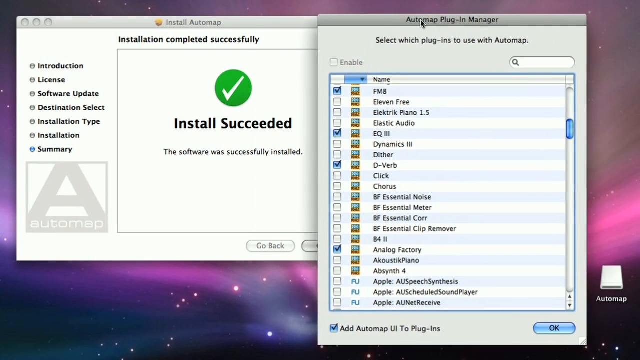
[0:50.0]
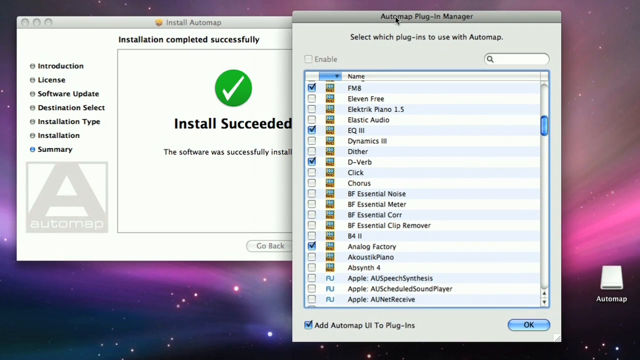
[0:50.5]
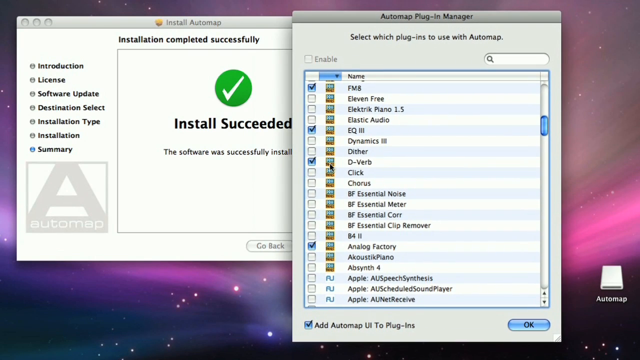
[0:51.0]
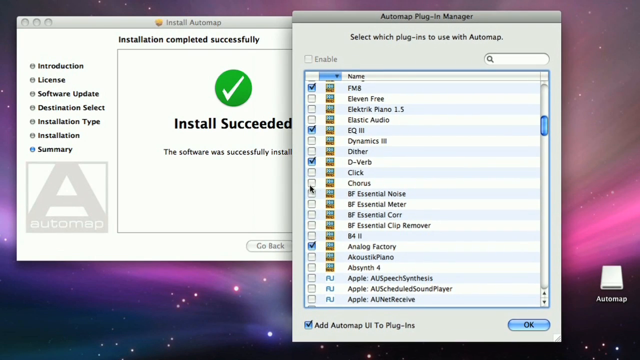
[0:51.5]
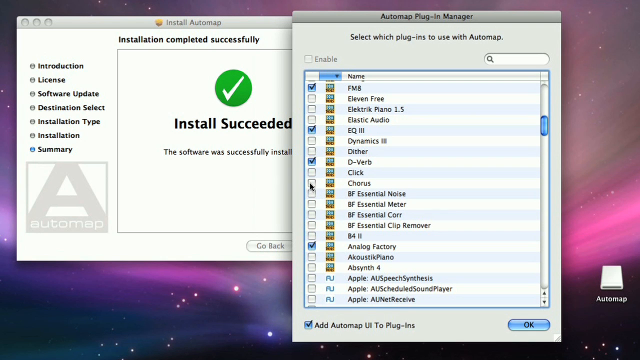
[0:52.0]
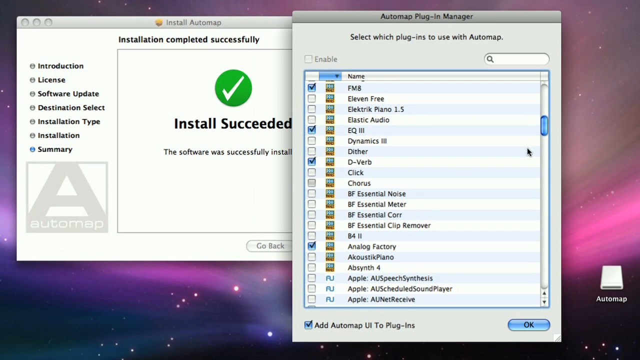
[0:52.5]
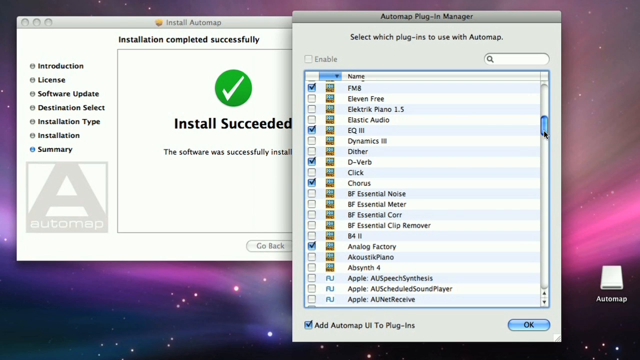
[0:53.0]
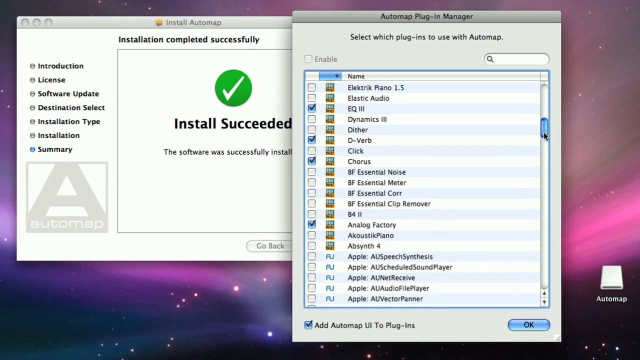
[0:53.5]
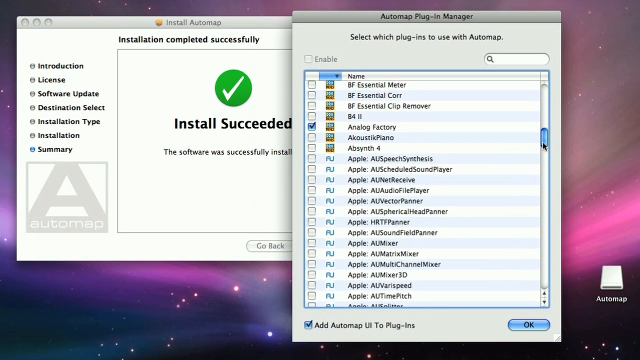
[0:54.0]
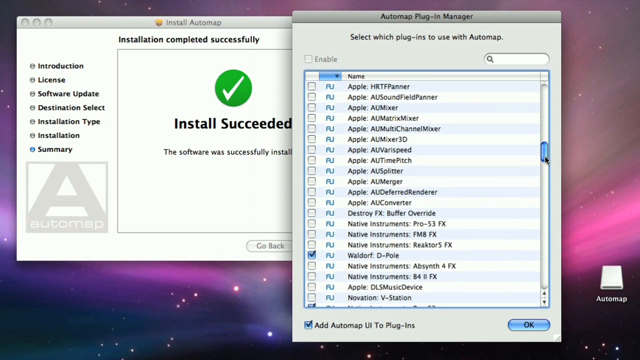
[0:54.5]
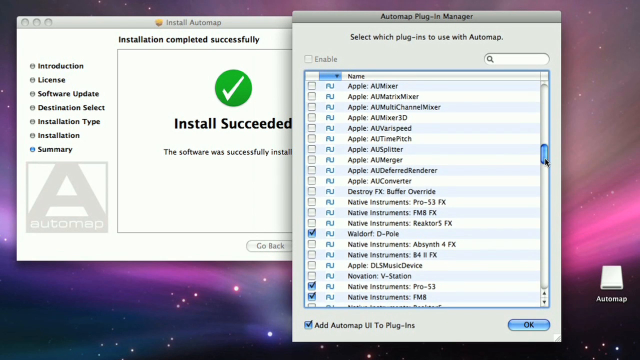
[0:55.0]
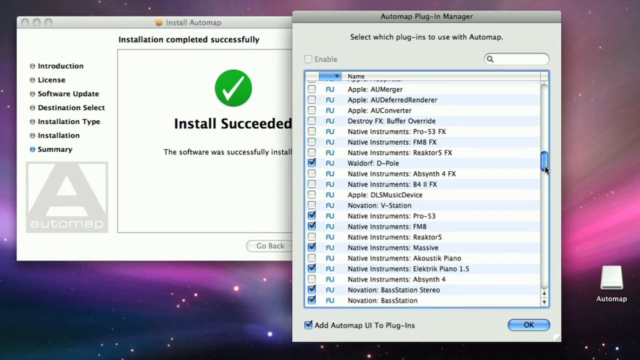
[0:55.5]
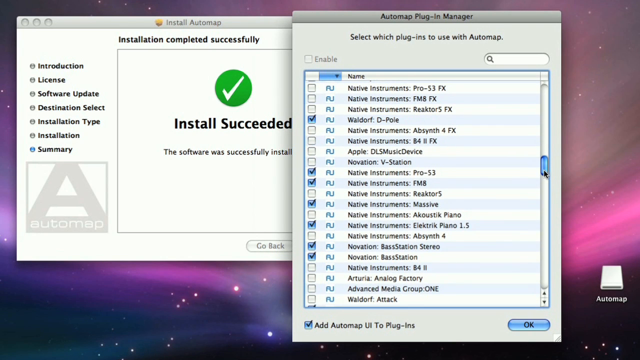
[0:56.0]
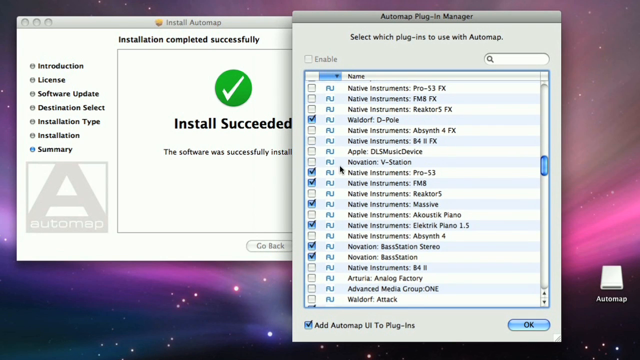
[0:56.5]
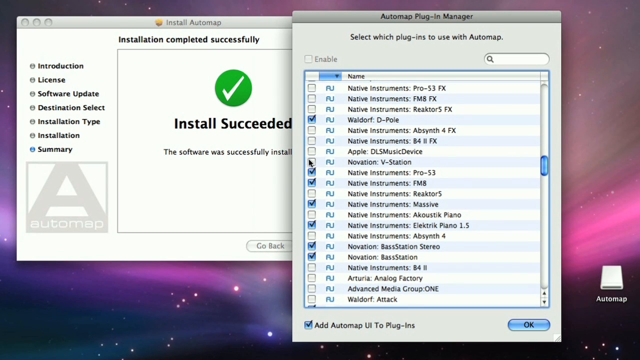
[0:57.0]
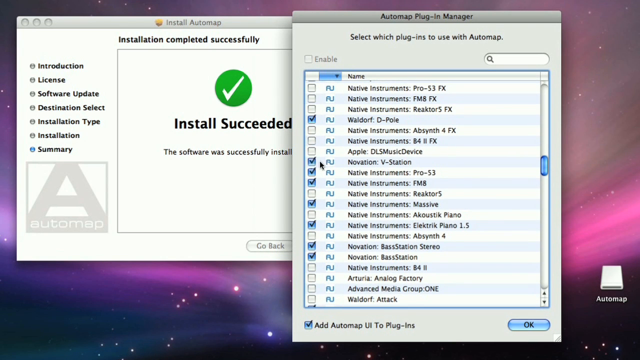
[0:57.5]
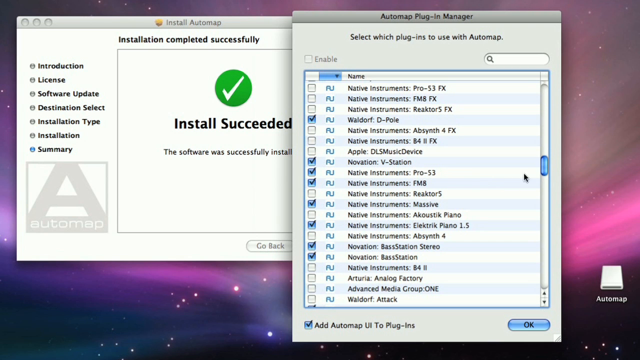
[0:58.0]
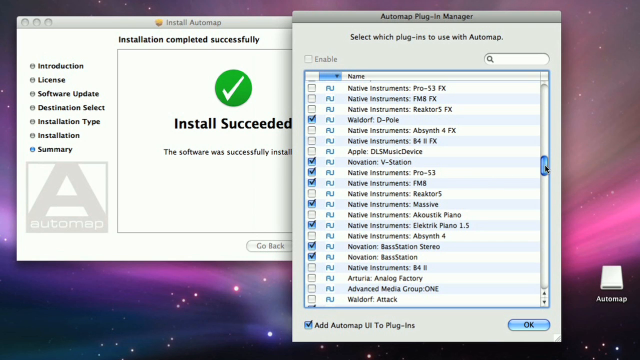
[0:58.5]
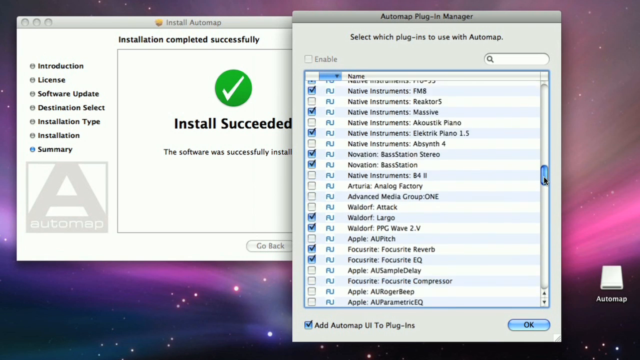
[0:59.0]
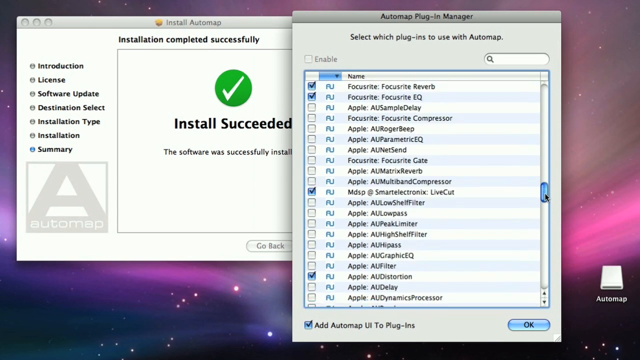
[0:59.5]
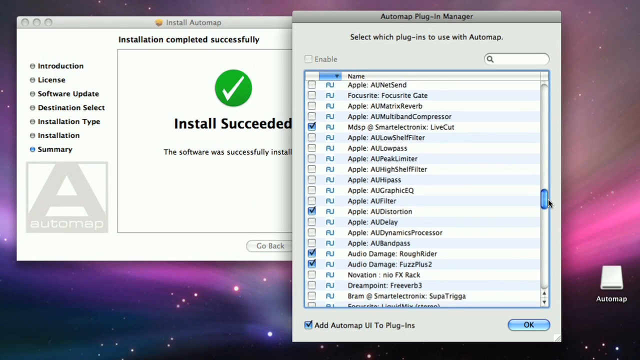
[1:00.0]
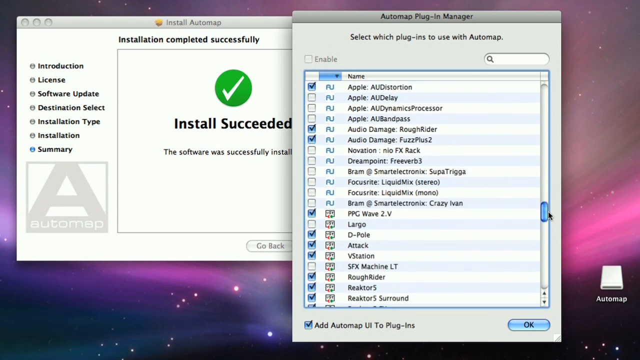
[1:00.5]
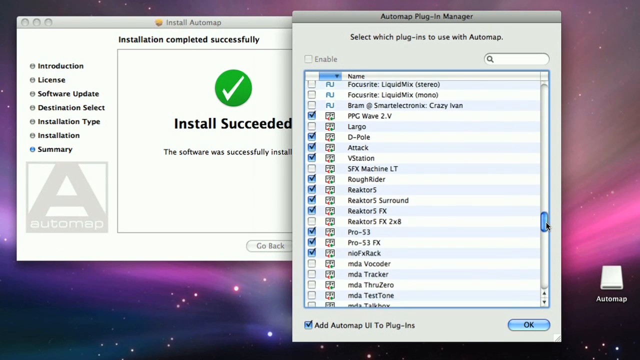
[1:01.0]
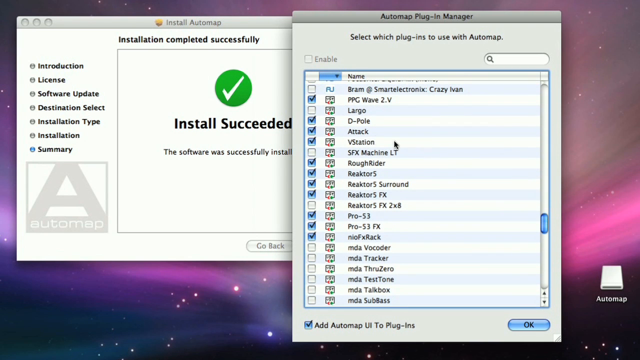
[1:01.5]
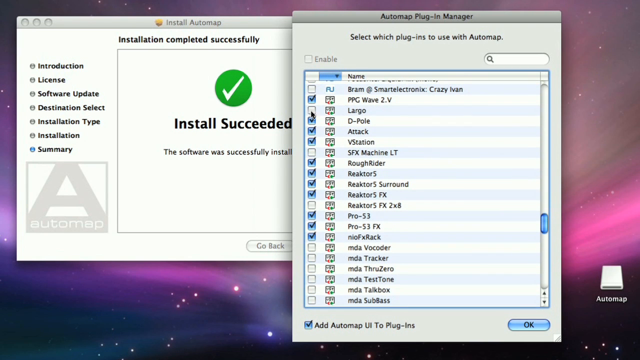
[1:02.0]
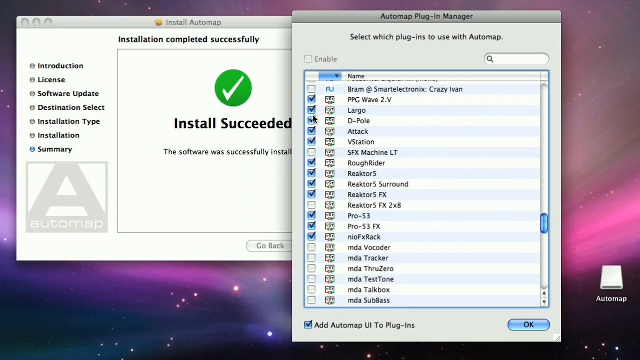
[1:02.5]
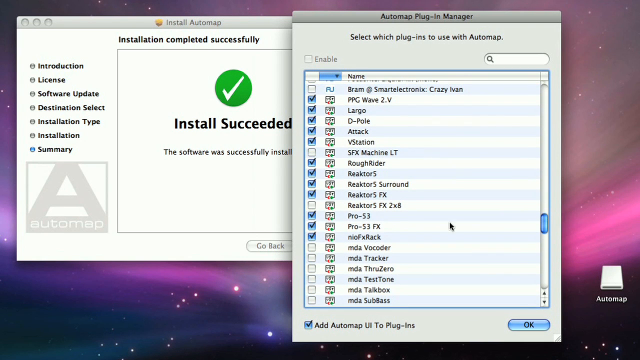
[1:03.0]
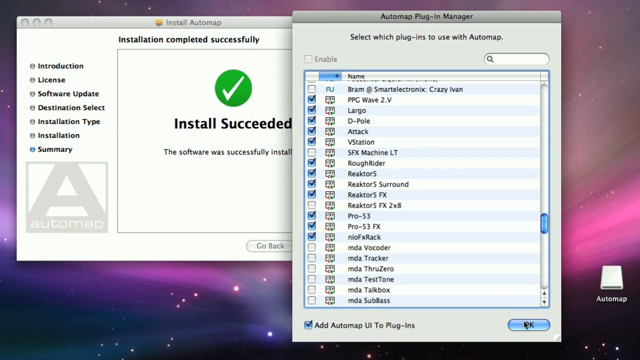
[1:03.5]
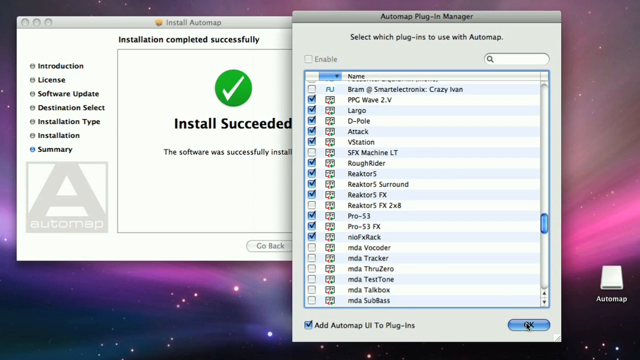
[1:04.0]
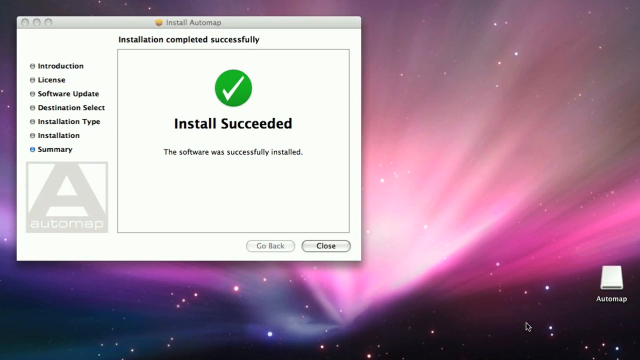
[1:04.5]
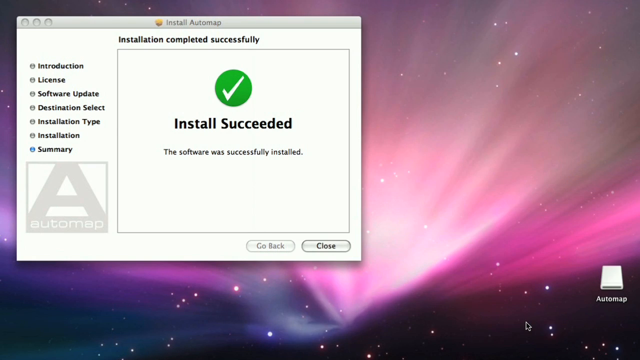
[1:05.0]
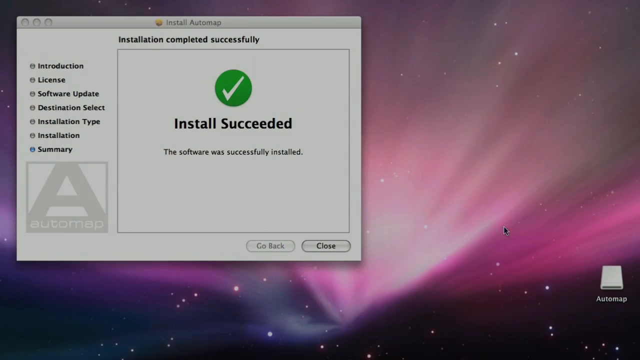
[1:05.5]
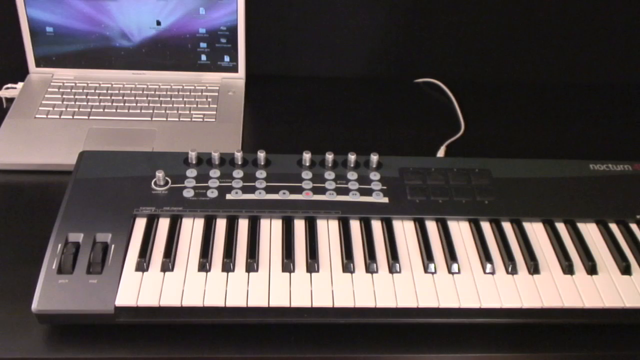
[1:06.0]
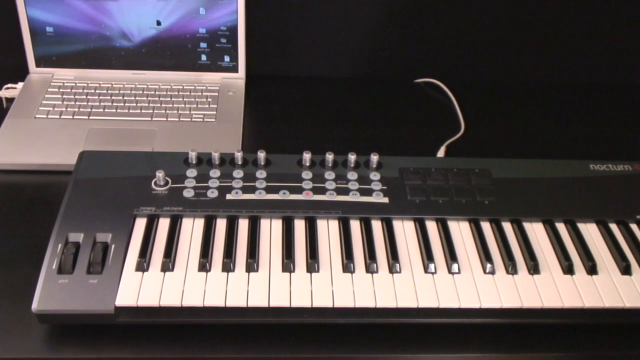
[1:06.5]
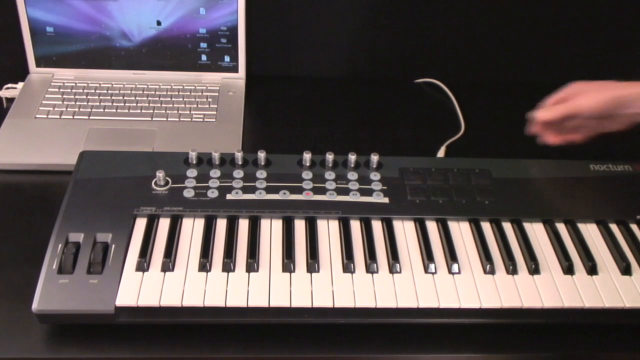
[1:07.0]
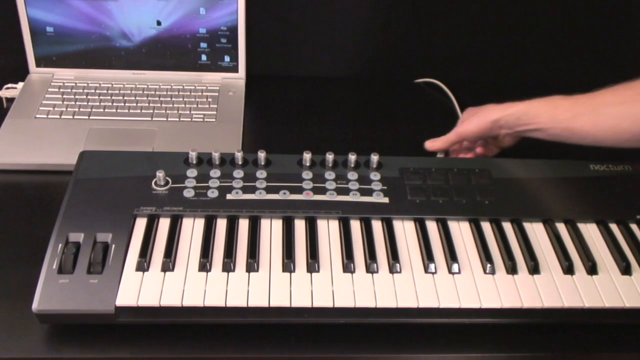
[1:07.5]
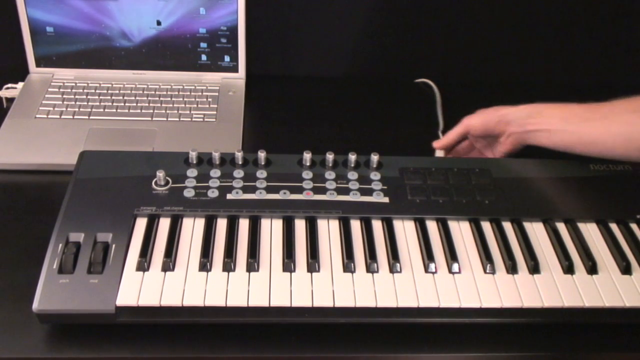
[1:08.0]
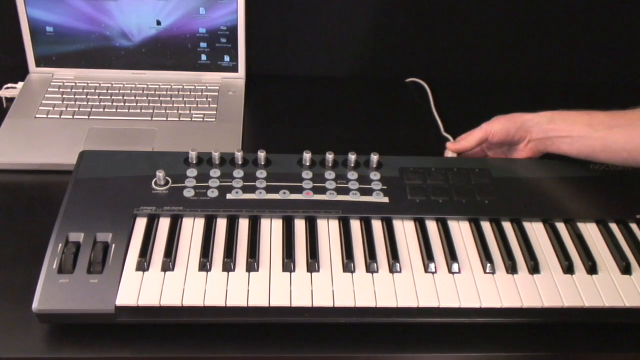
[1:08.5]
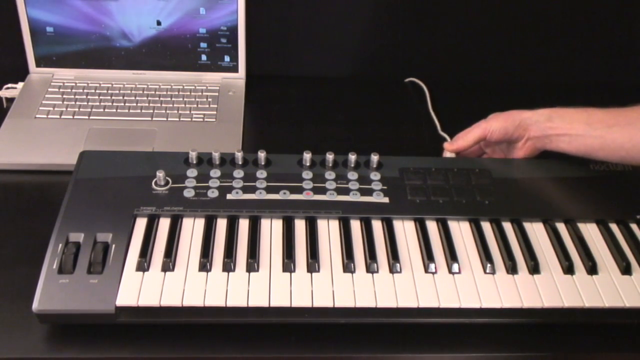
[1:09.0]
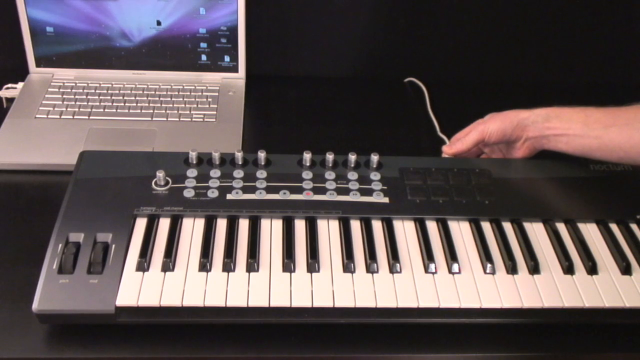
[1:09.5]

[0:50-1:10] A software screen on a laptop shows an installation completed successfully dialogue with a green tick in the background and, in the foreground, another dialogue called Automatic Plugin Manager. The user scrolls through a list of attributes that can be enabled. First they select Chorus and make sure it is enabled, then scroll down and select Novation v Station, then continue further down the list to an attribute called Largo and ensure it is enabled. Finally they click the OK button in the bottom right corner of the dialogue, and it disappears from the screen. The scene returns to the laptop in the background sitting next to the keyboard; the black keyboard is to the right of the silver laptop, and a lead leads up to it. The person sitting next to the keyboard plugs the lead, which is gray, into the back of the keyboard.